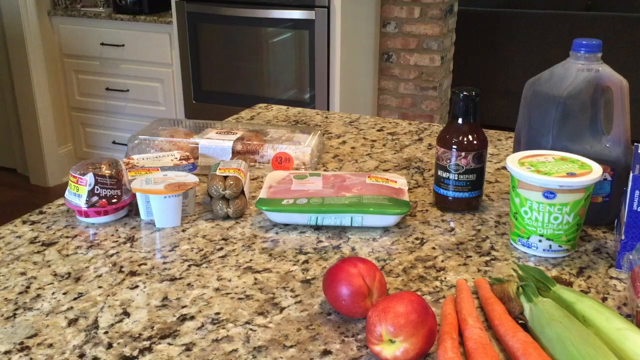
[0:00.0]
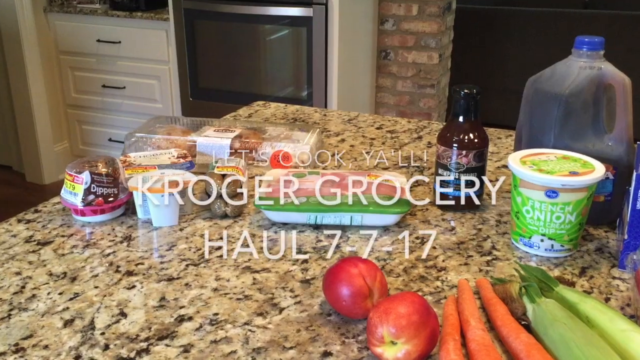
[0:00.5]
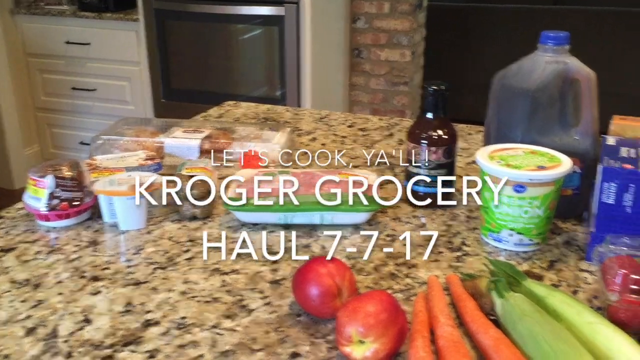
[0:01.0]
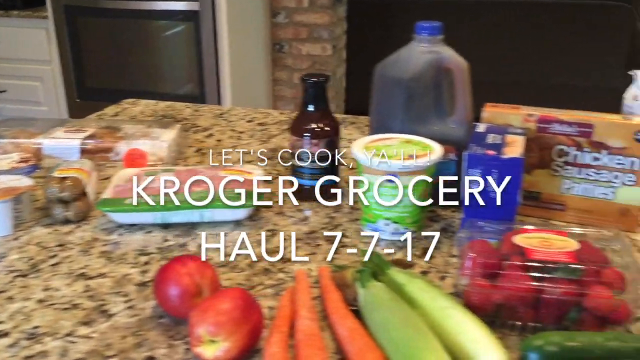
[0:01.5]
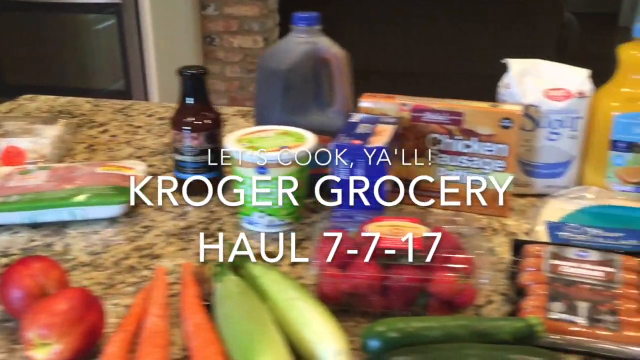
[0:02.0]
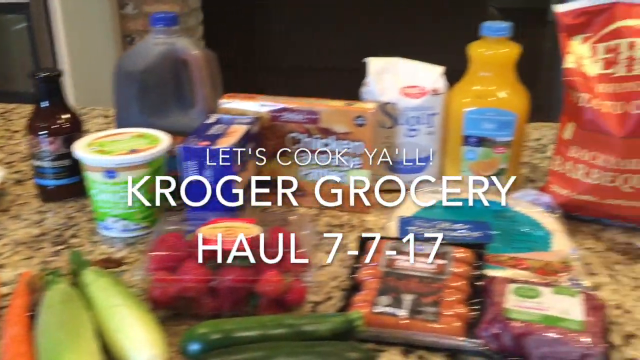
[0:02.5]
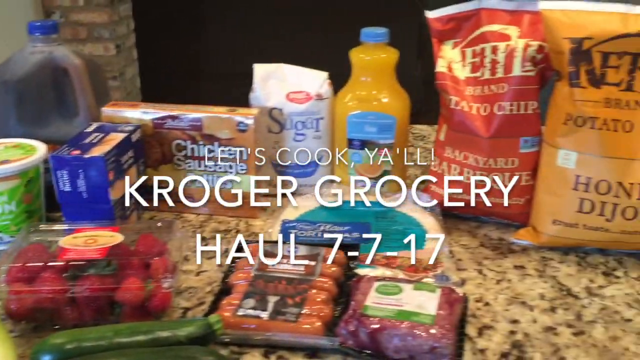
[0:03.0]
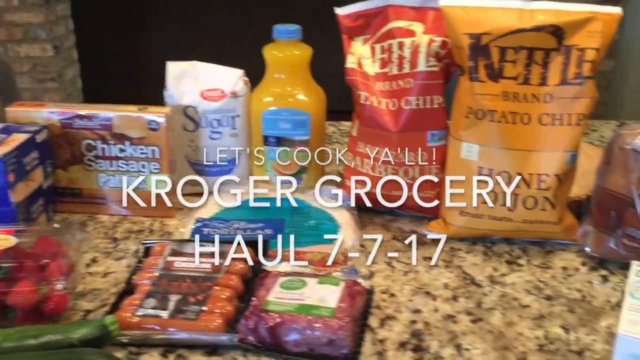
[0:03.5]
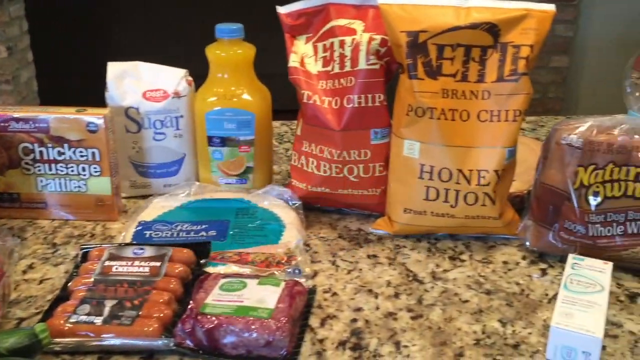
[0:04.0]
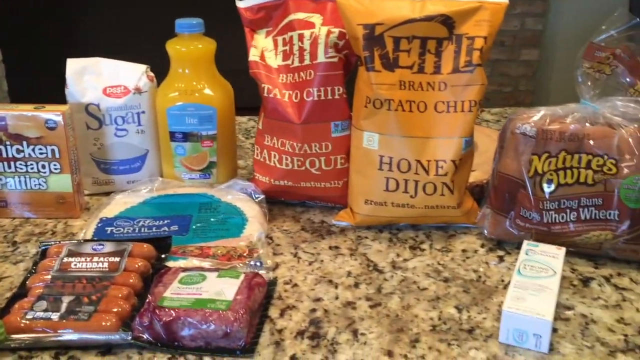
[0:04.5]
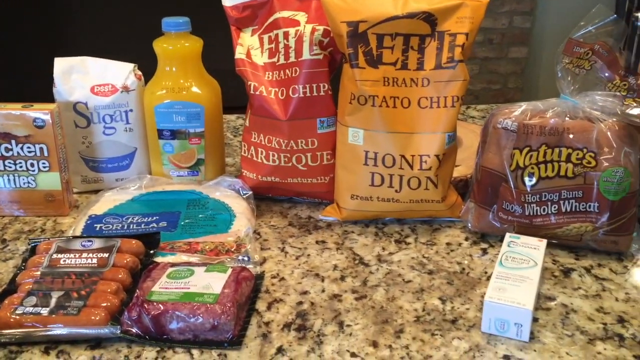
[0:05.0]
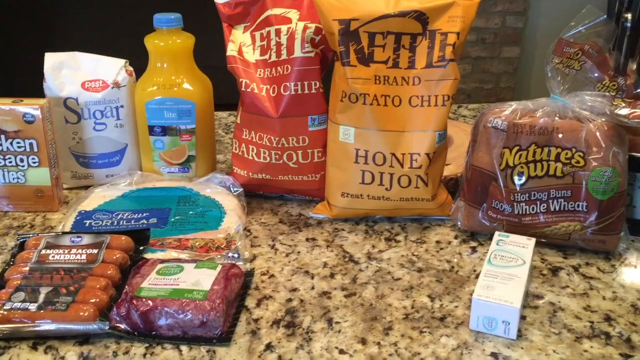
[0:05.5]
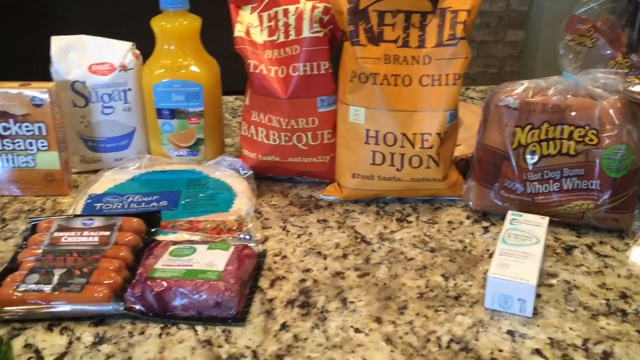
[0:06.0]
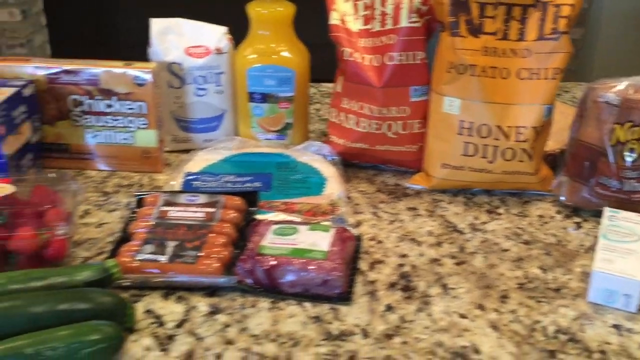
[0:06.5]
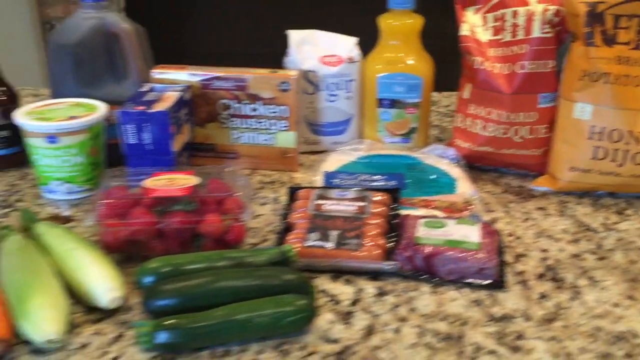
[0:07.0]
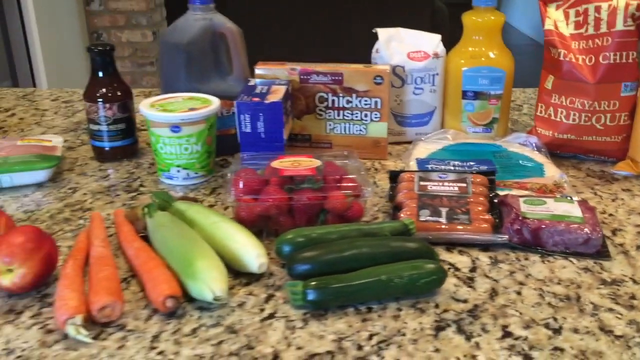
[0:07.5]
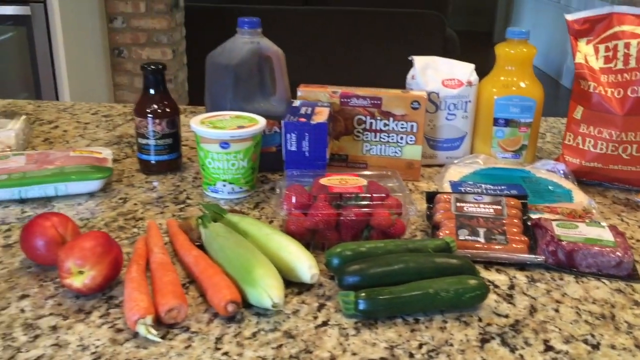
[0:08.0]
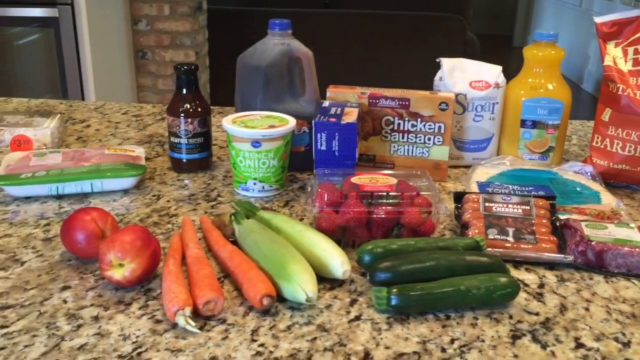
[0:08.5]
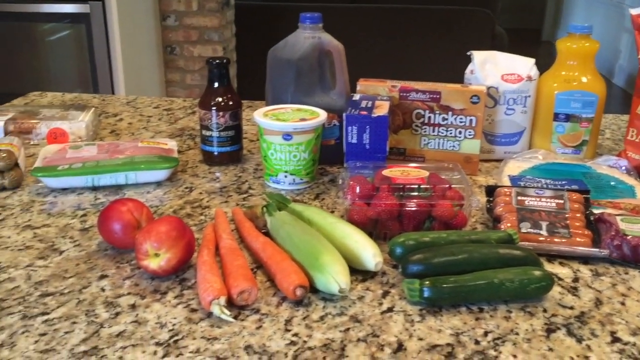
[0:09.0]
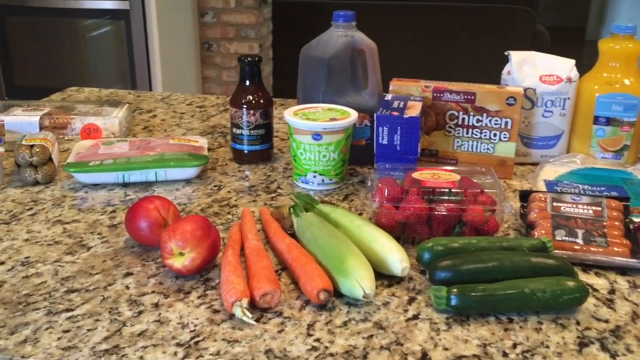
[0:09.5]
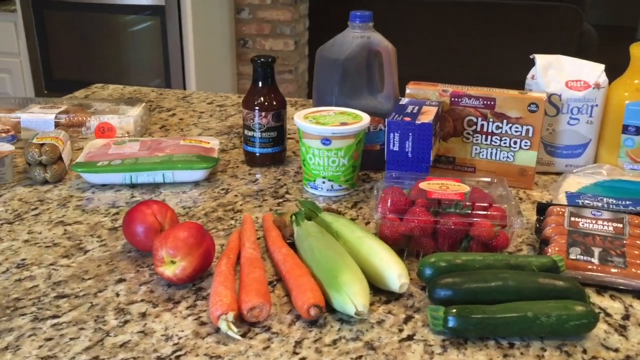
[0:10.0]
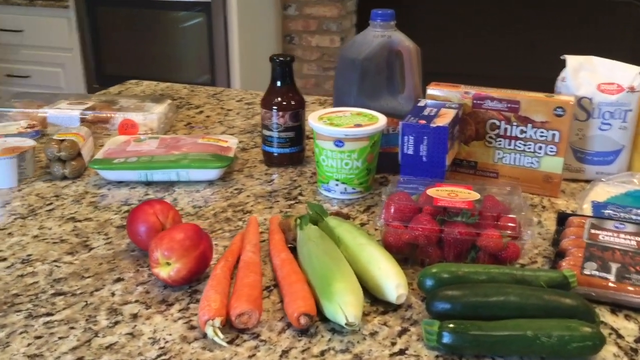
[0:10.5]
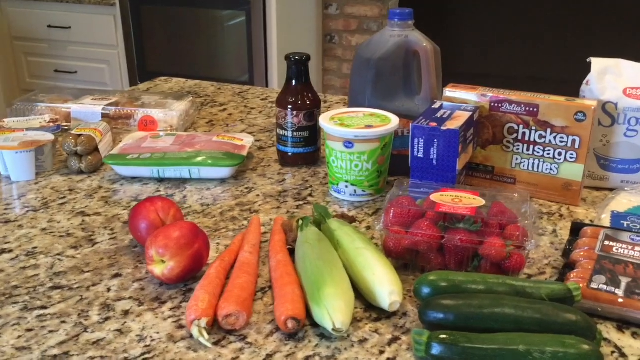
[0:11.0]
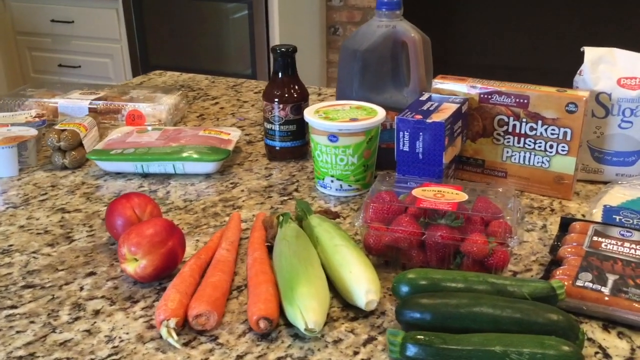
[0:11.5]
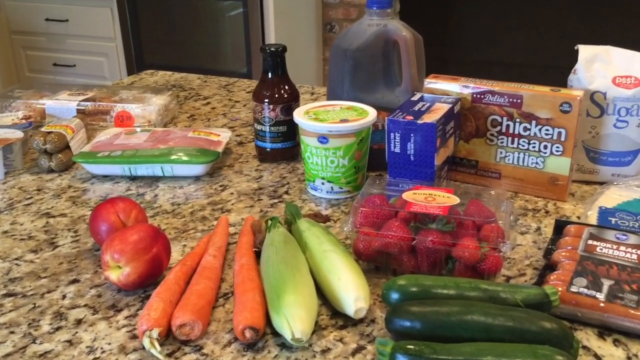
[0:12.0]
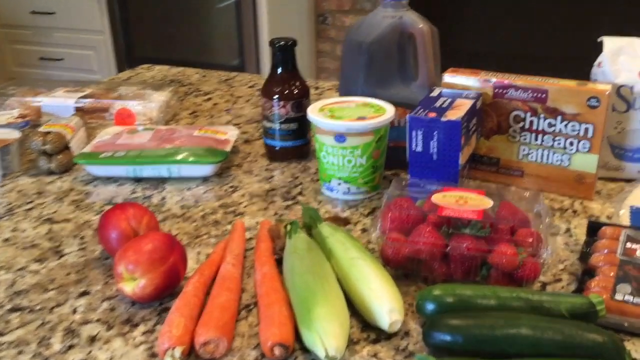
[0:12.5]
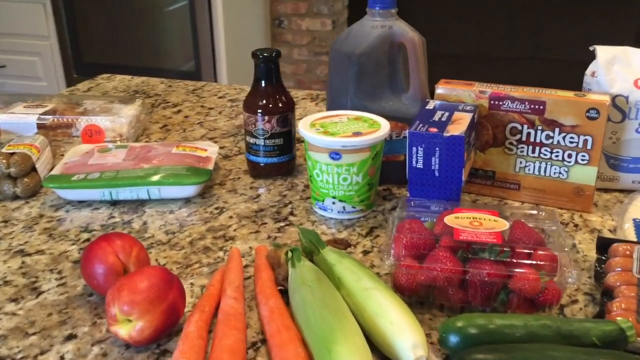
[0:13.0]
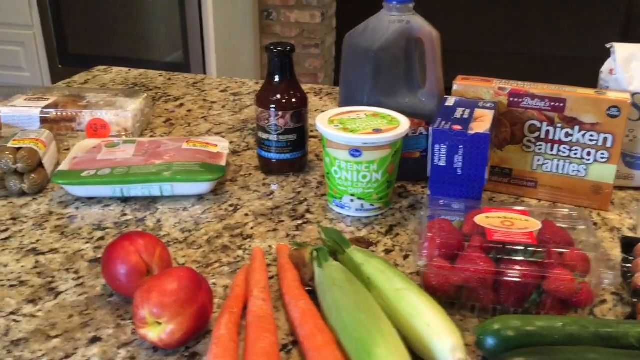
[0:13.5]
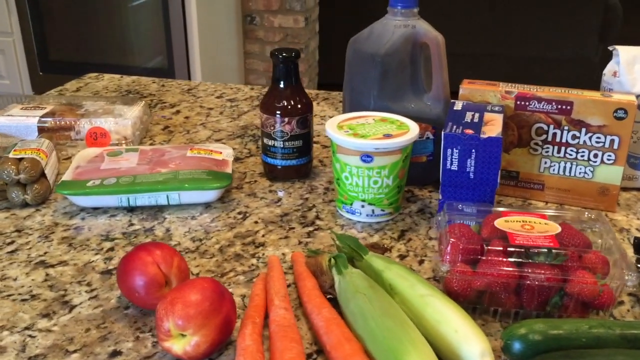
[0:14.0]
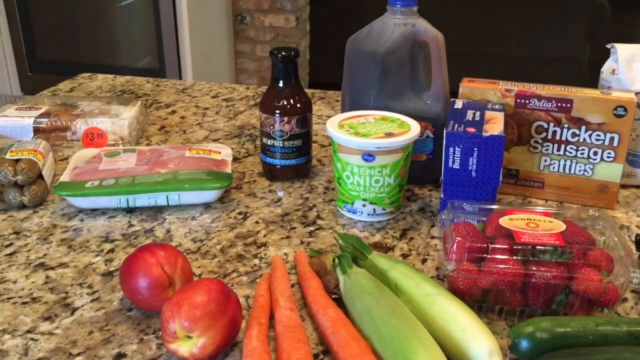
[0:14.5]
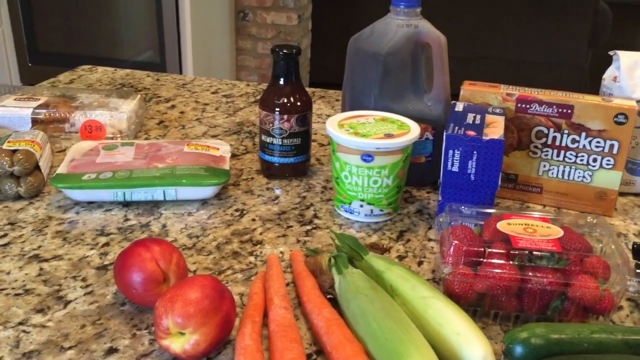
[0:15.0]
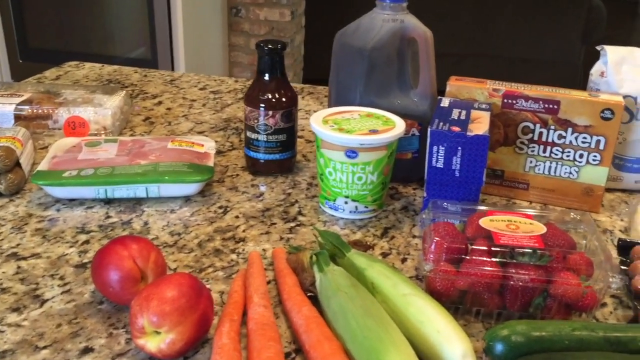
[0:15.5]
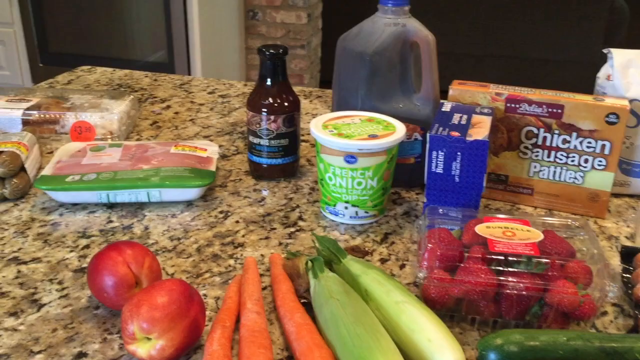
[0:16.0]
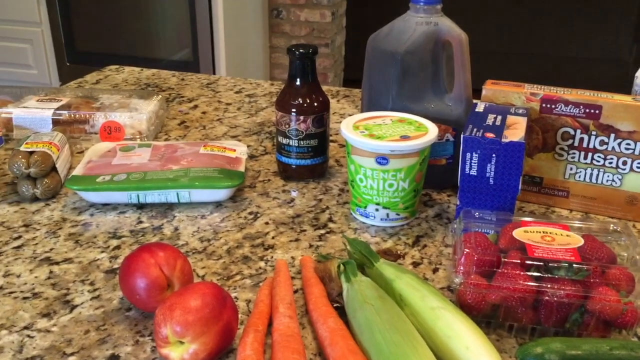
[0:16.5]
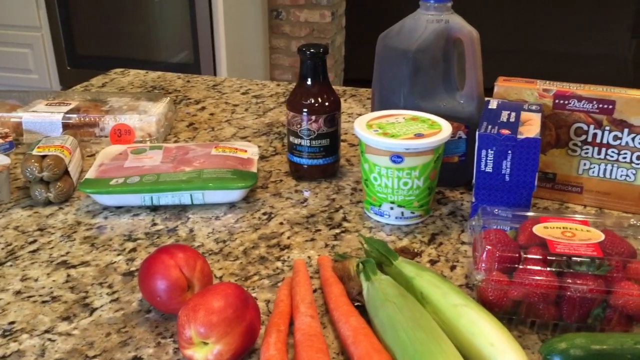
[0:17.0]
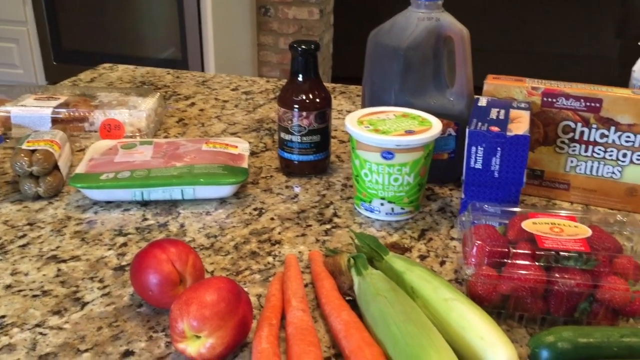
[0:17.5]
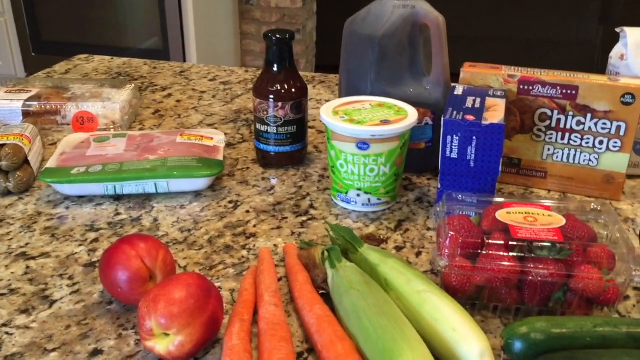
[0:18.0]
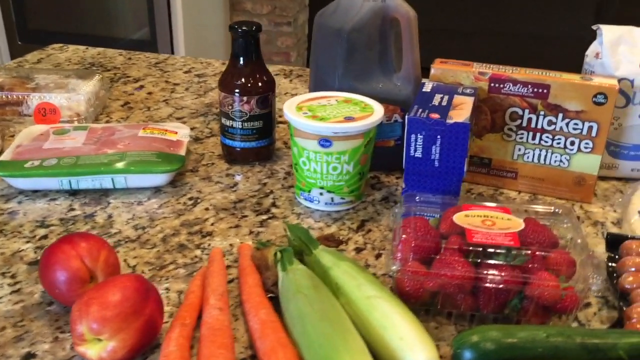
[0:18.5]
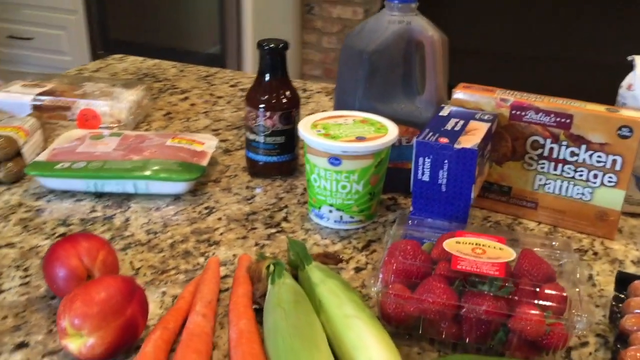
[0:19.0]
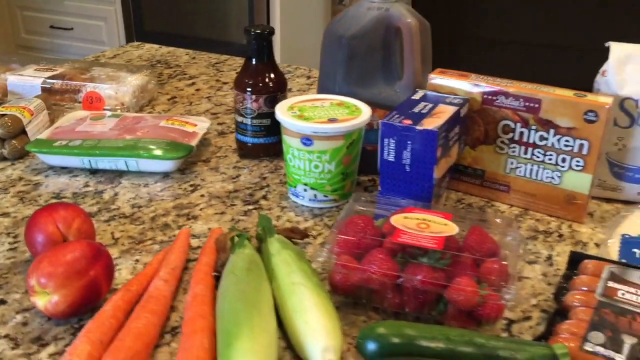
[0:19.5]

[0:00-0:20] Groceries that have been bought are laid out on a table: different types of cucumber, carrots, apples, mille-feuille, chicken, sausage, and many bottles, among many other items. The table holding the food is very clean and shows many different colors, and the room looks clean.